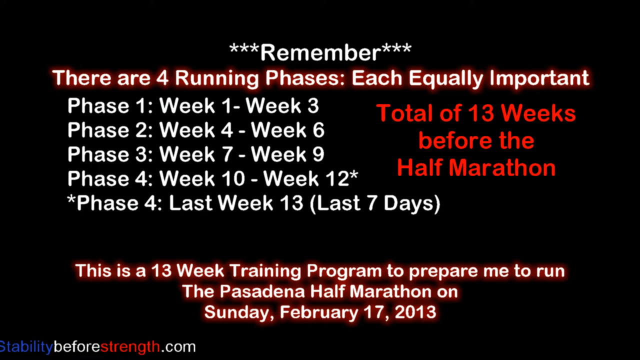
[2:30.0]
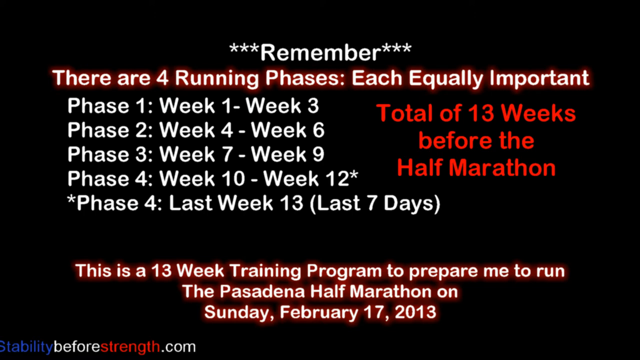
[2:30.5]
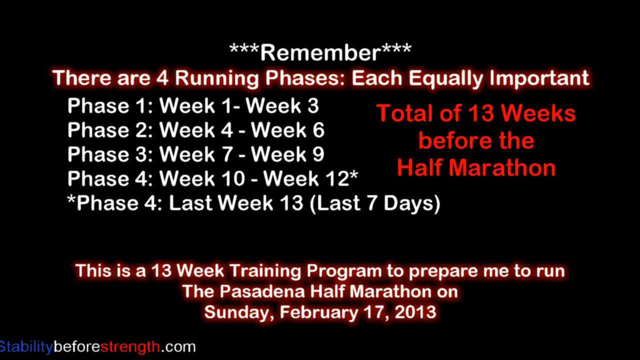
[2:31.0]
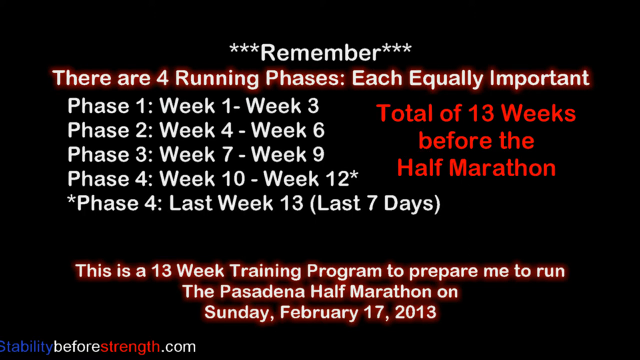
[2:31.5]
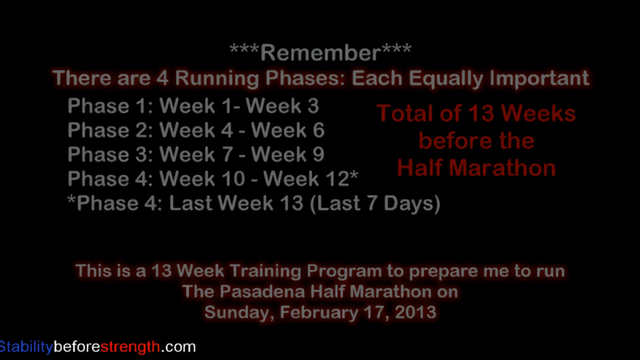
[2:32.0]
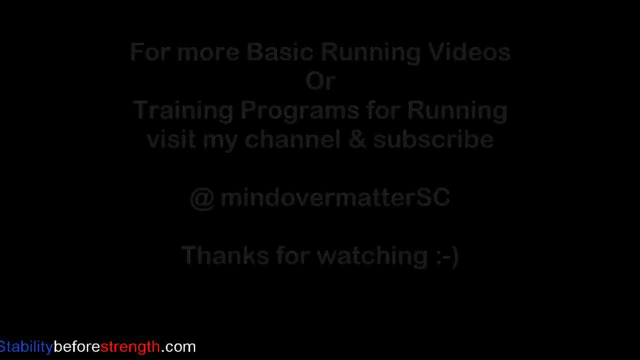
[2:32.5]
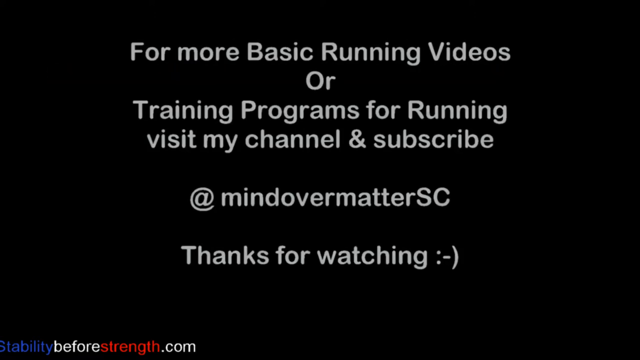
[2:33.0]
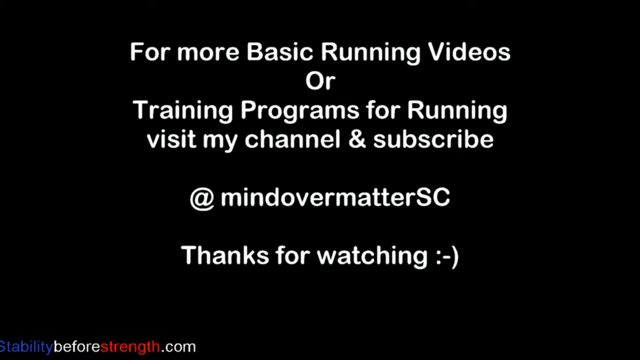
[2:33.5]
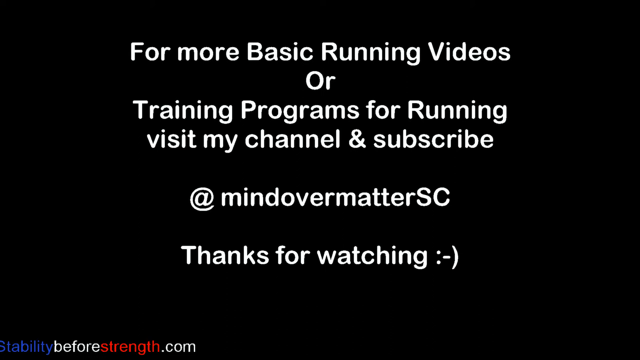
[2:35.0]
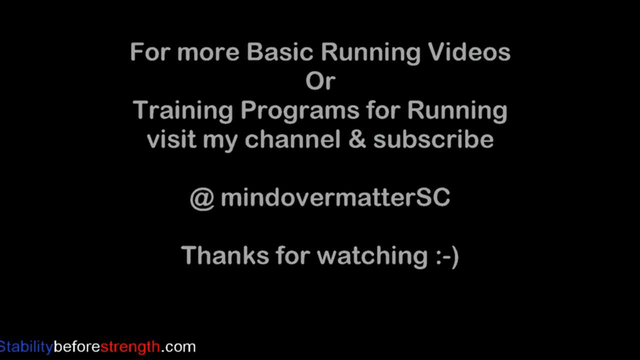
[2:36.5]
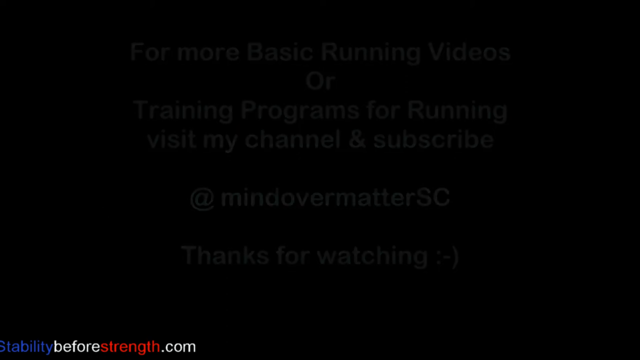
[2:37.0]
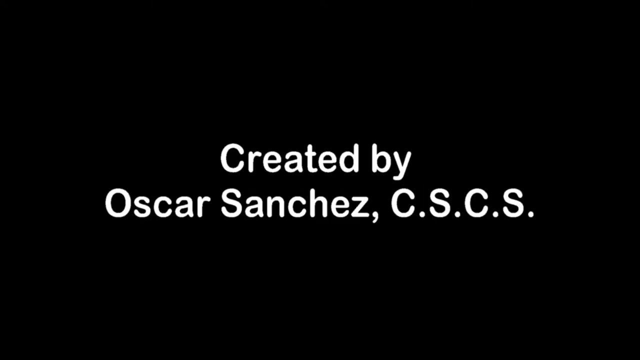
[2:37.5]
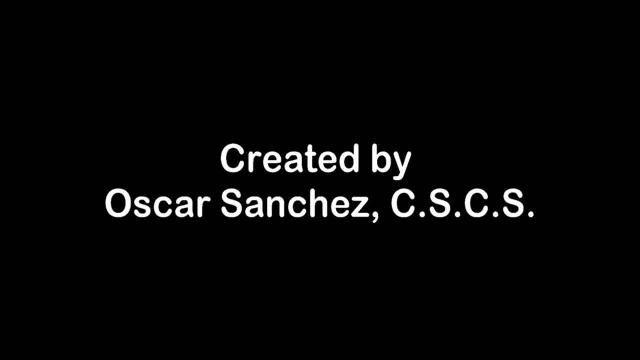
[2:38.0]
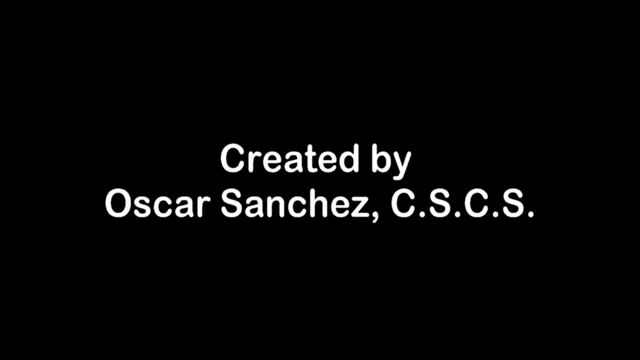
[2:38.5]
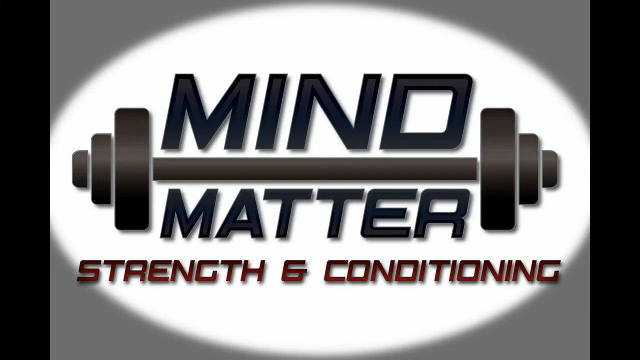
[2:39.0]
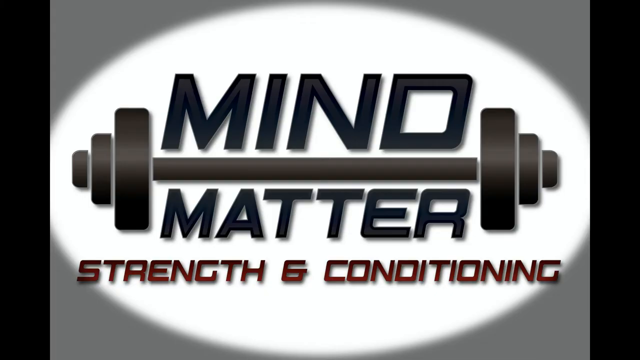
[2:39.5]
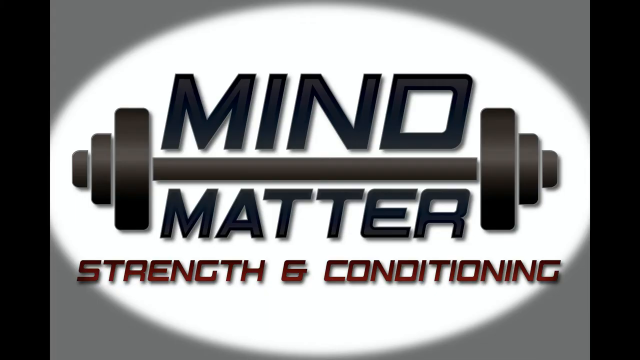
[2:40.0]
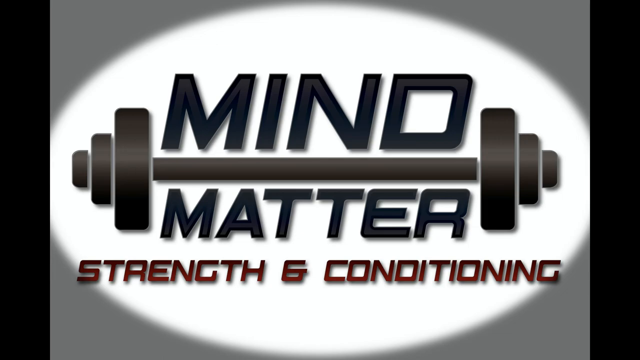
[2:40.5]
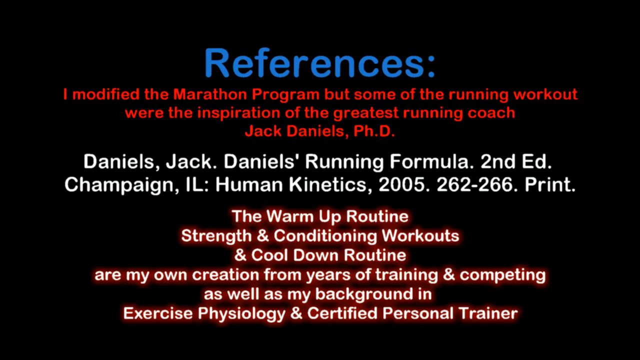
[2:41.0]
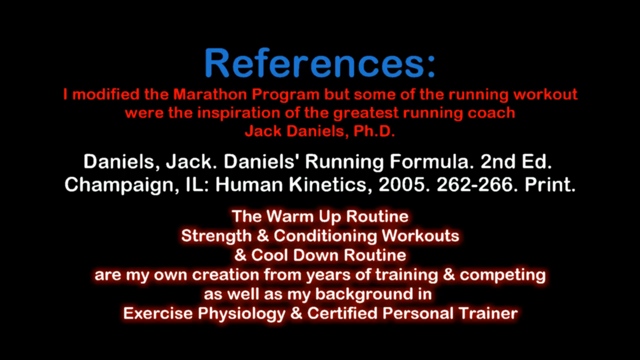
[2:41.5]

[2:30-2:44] At the bottom of the page, in white lettering with a red glowy font, it says "this is a 13 week training program to prepare me to run the Pasadena half marathon on Sunday February the 17th 2013". The screen then fades out to a final screen that says "for more basic running videos or training programs for running visit my channel and subscribe". The channel is @mindovermattersc, and beneath it the screen says "thanks for watching" with a smiley face.